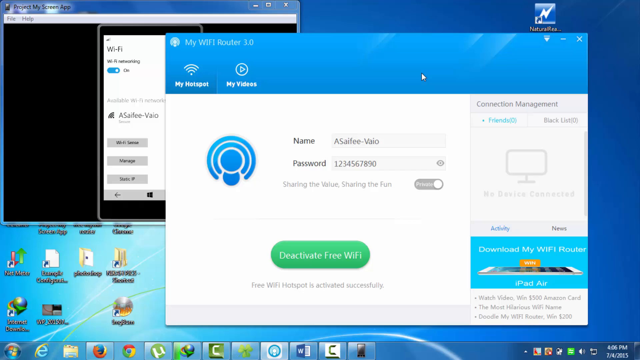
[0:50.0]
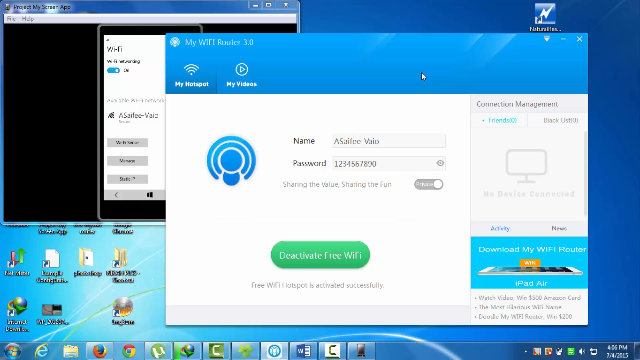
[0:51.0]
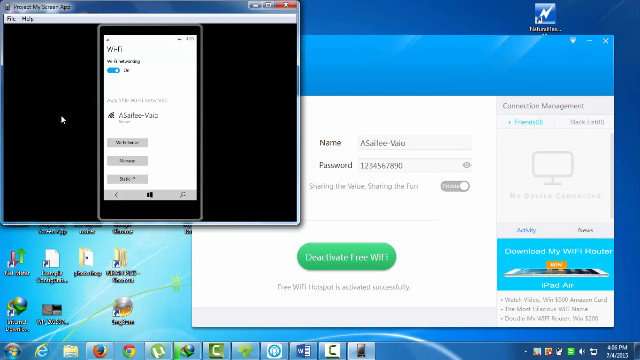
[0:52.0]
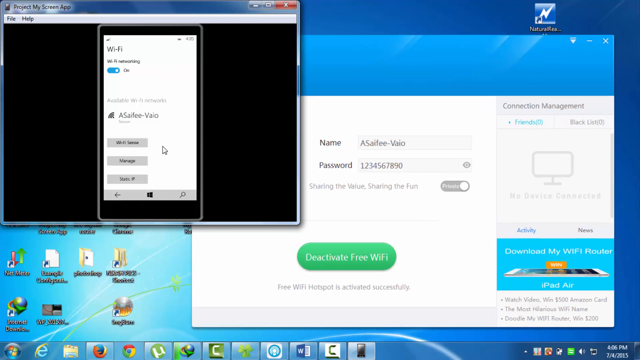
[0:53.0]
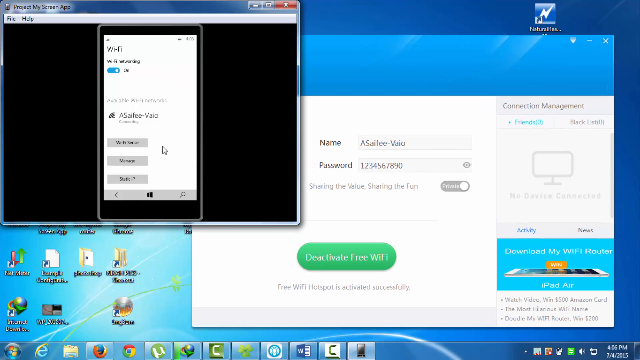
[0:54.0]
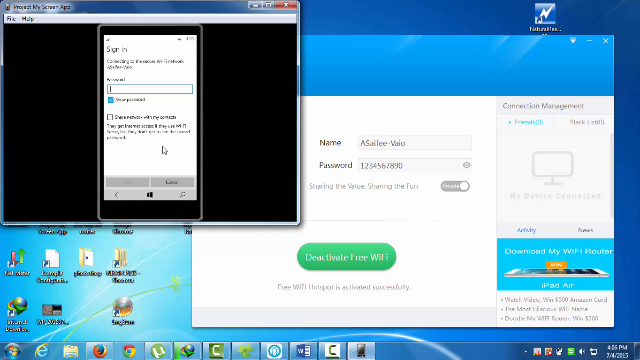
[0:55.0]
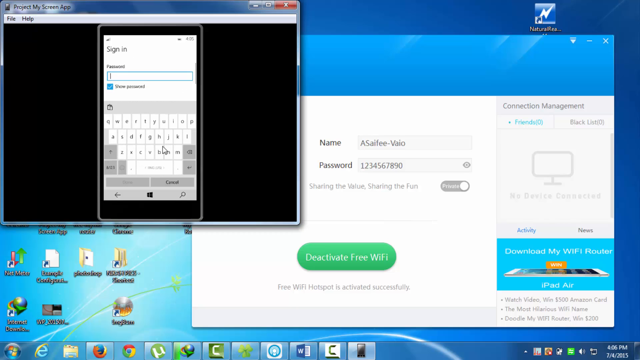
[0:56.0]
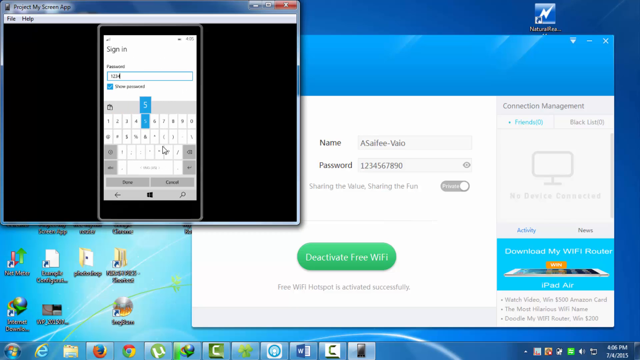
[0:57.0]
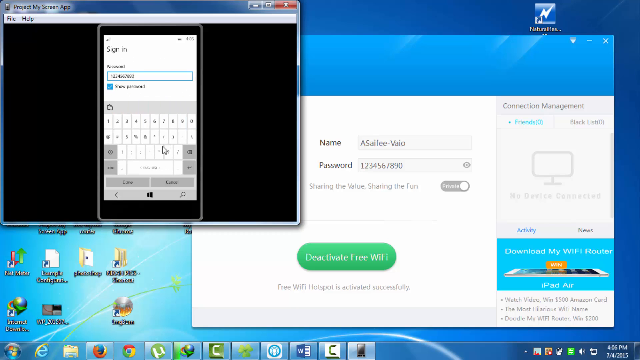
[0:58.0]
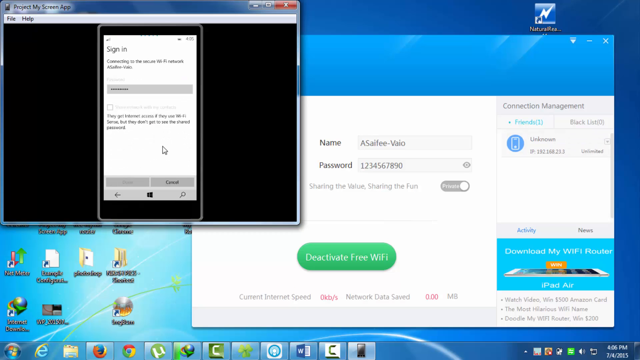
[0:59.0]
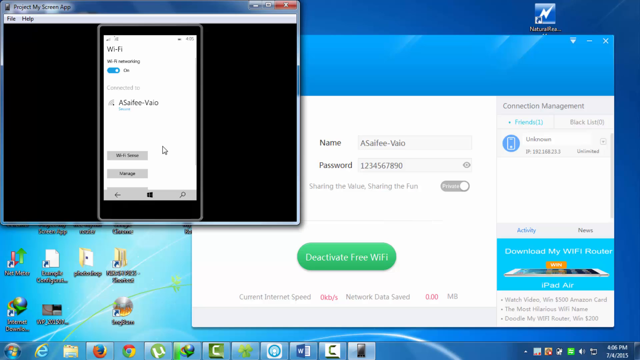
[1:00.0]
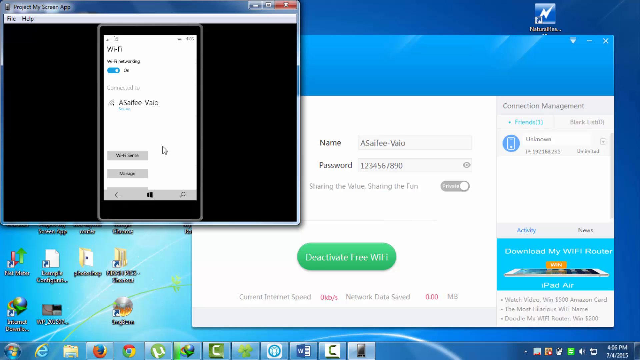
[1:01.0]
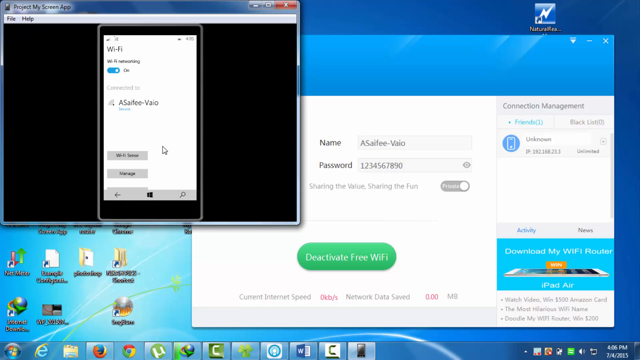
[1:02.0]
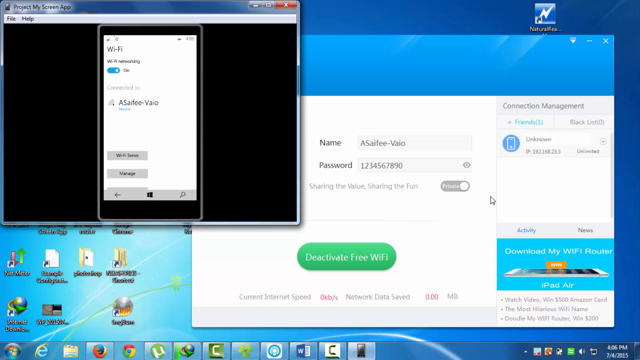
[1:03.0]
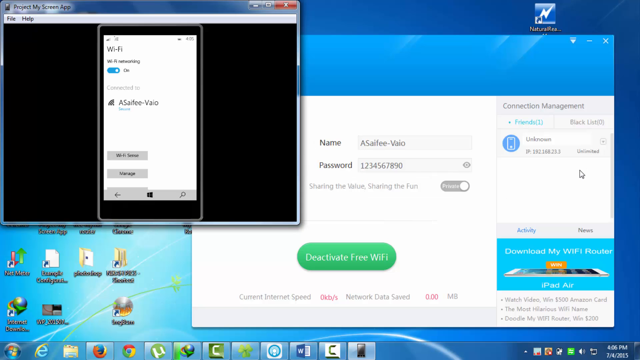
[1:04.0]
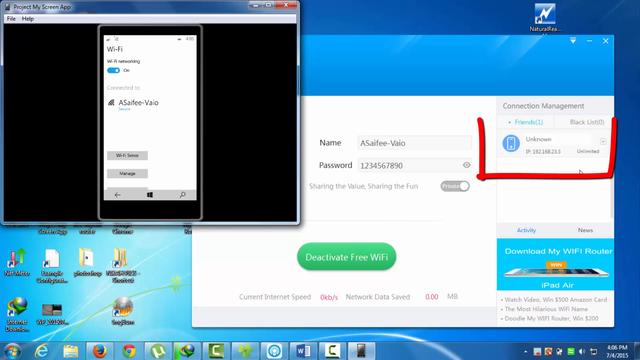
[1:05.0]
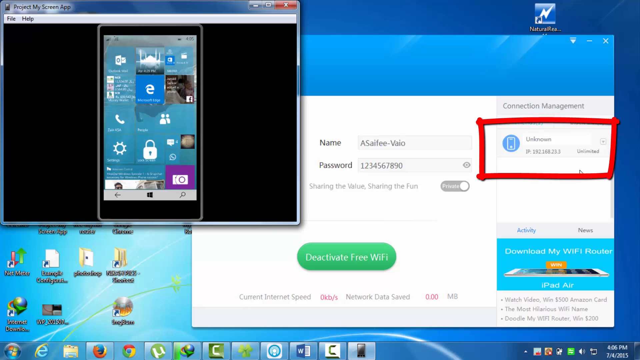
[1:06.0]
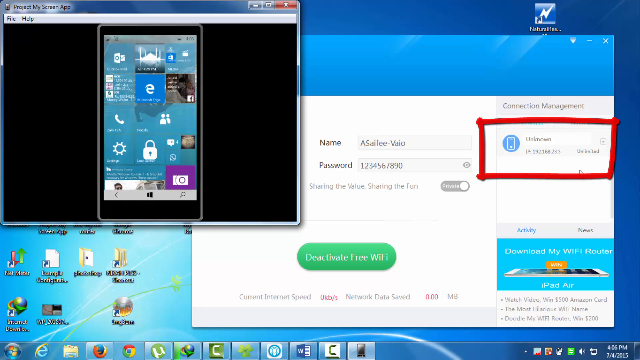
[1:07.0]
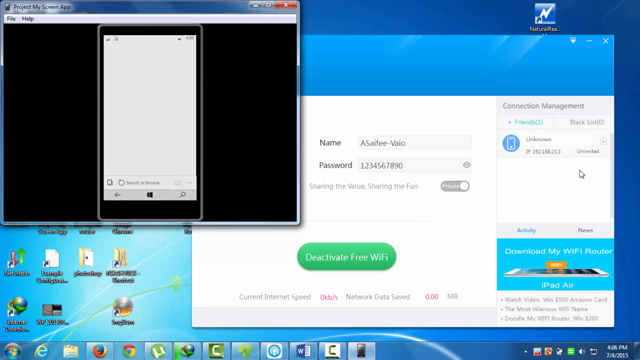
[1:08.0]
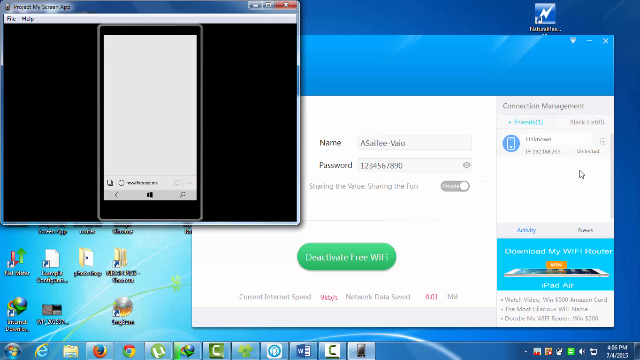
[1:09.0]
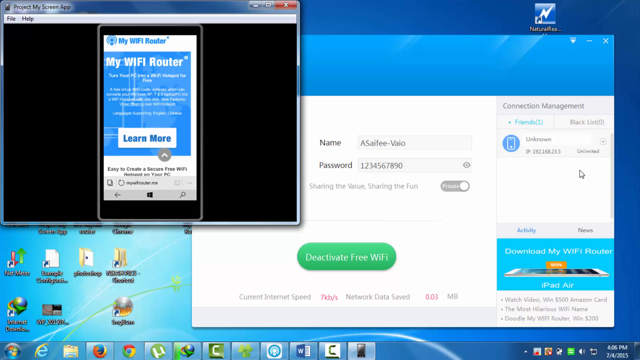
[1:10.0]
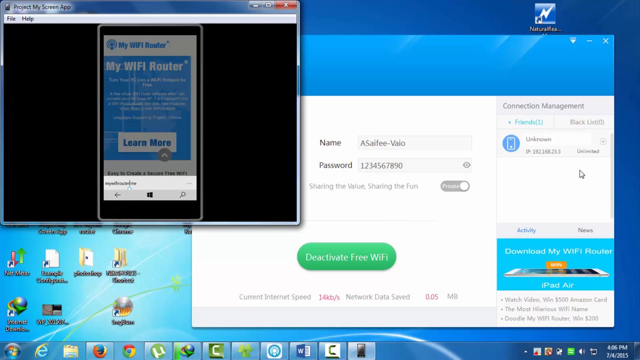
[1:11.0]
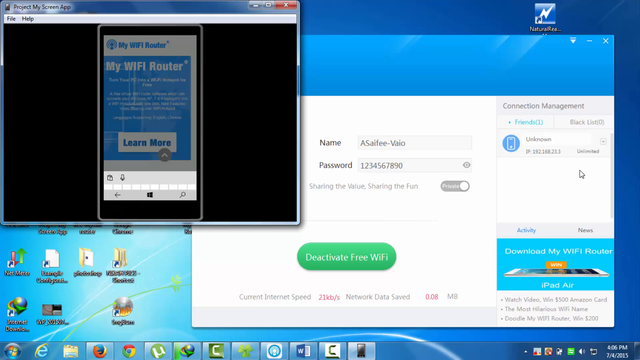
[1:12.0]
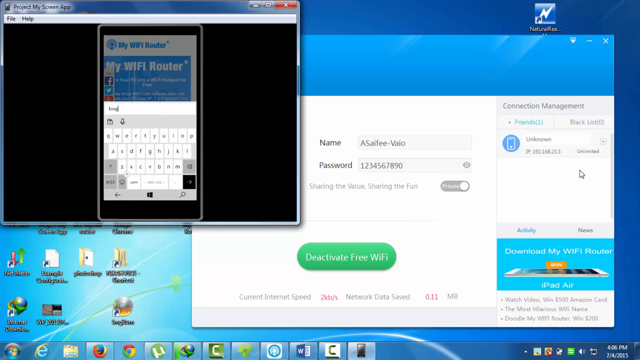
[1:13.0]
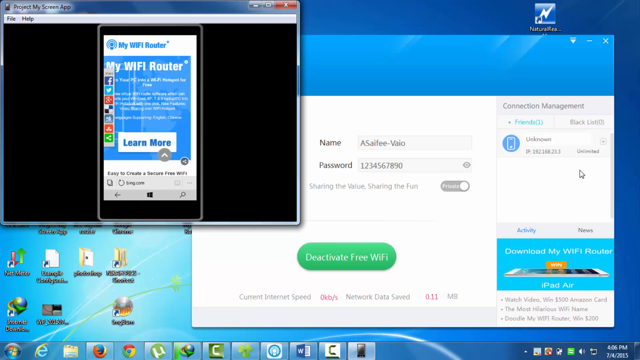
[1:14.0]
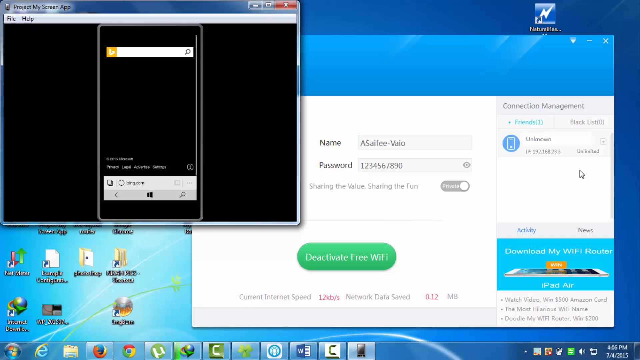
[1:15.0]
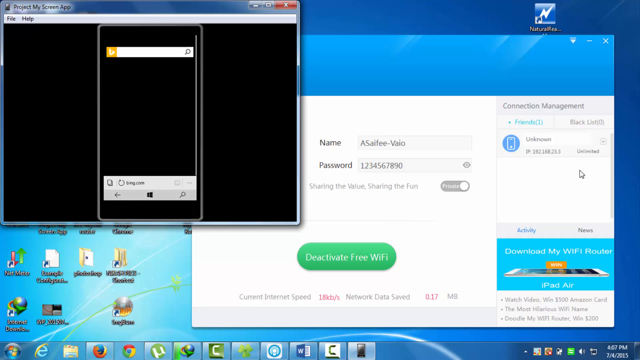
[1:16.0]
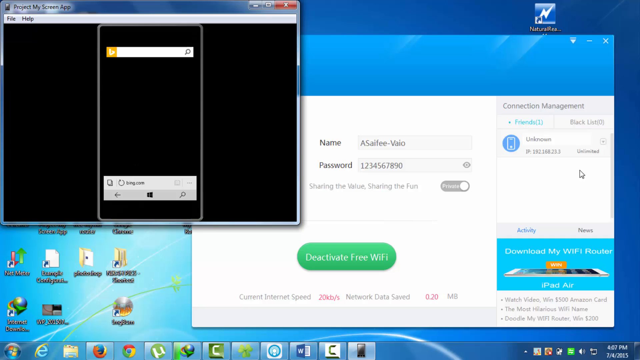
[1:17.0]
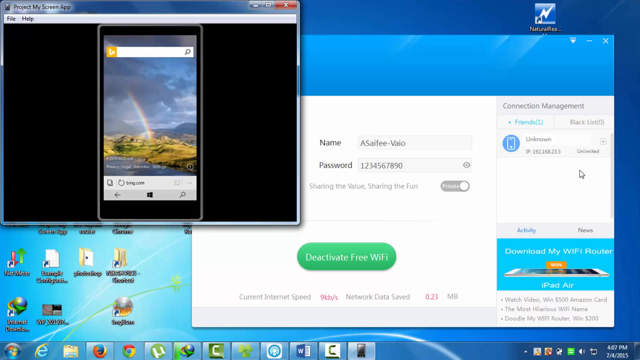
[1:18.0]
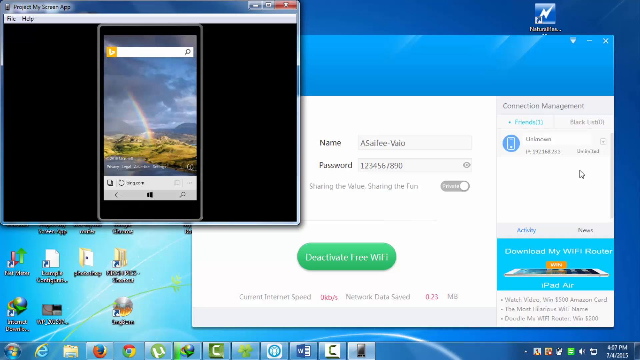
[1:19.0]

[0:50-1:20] My Wi-Fi Router has been installed on the laptop successfully, and an icon pops up on the desktop. My Wi-Fi Router is then downloaded on the phone. The phone is connected to the laptop: Wi-Fi is turned on on the phone, which then looks for the hotspot set up on the computer.